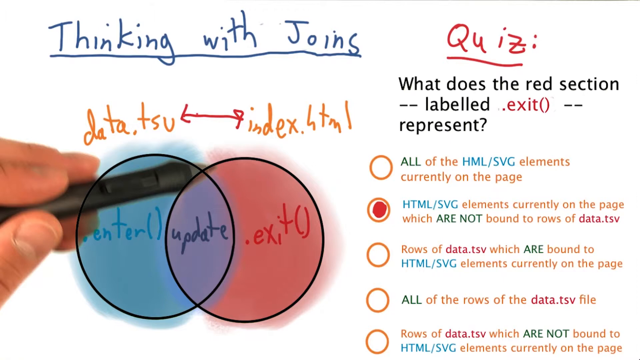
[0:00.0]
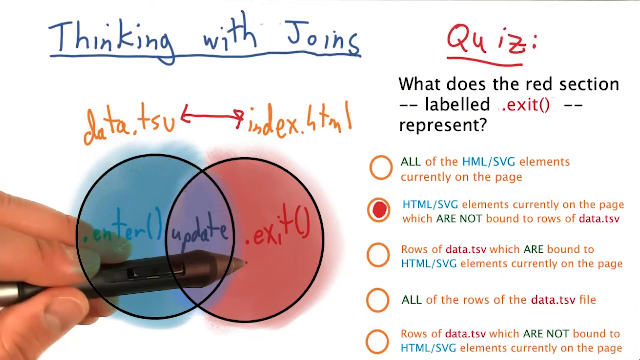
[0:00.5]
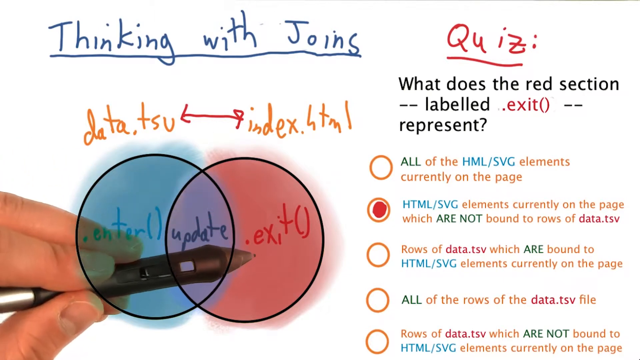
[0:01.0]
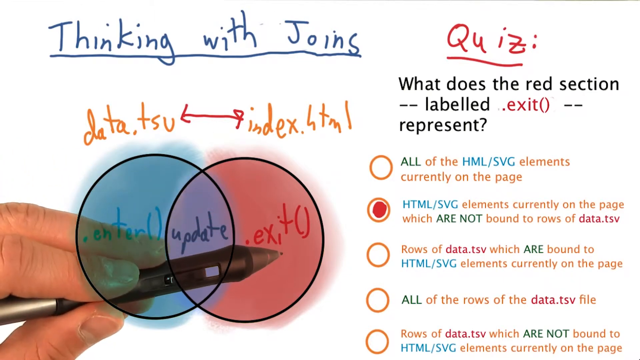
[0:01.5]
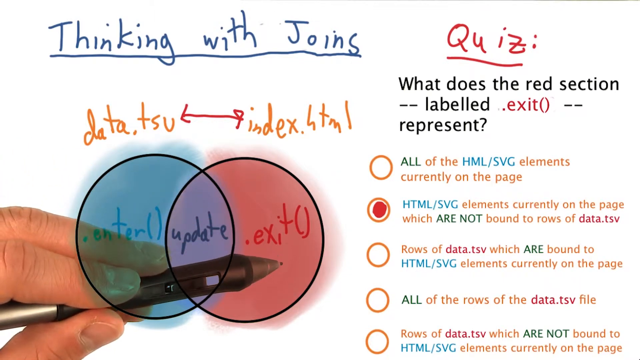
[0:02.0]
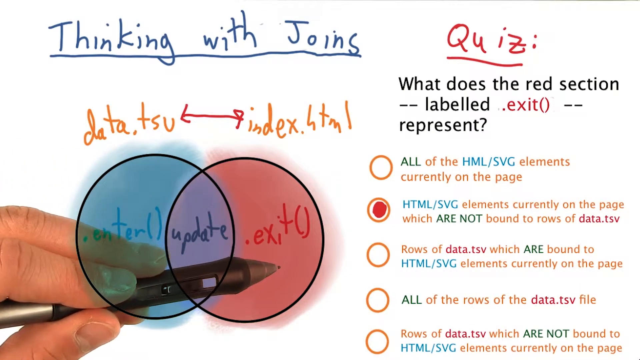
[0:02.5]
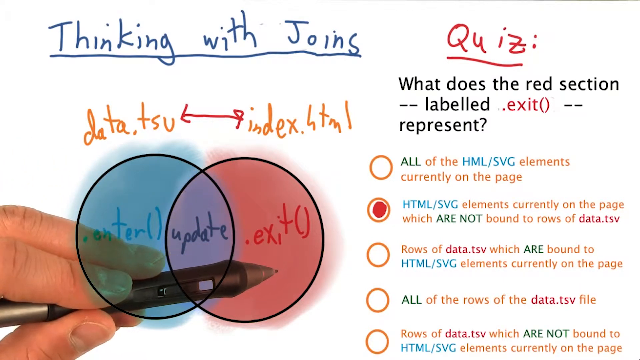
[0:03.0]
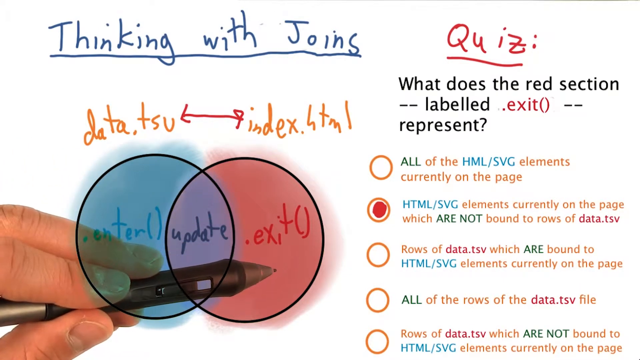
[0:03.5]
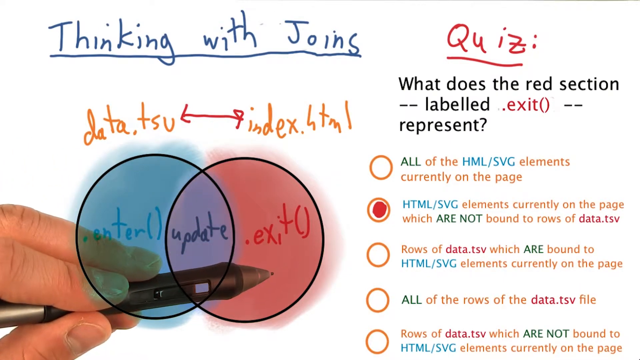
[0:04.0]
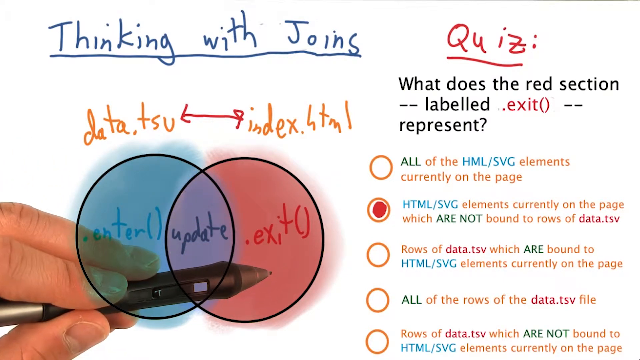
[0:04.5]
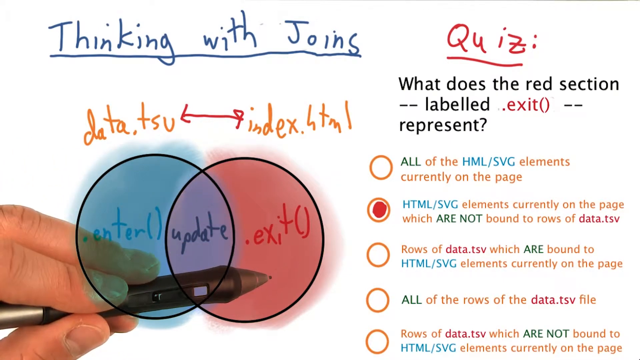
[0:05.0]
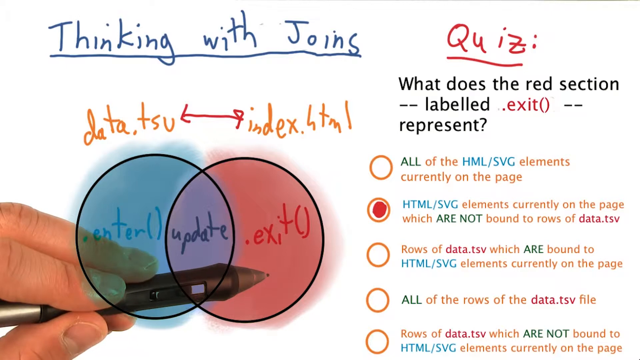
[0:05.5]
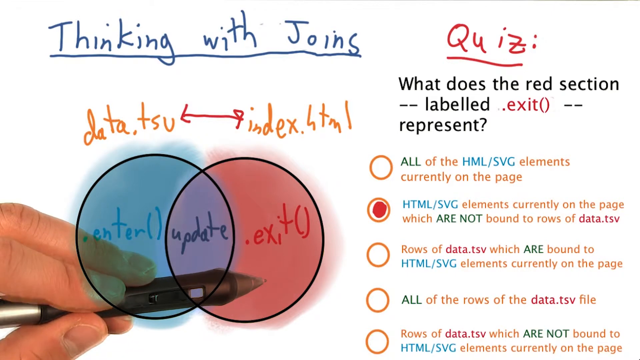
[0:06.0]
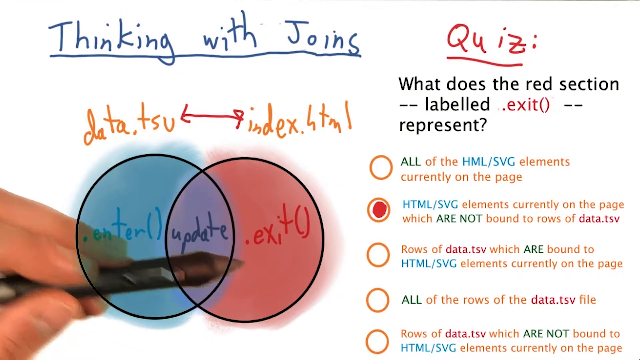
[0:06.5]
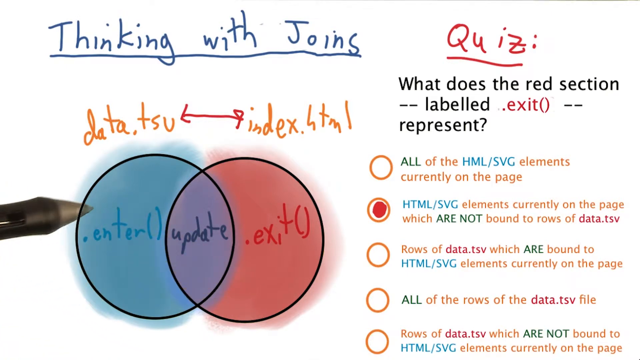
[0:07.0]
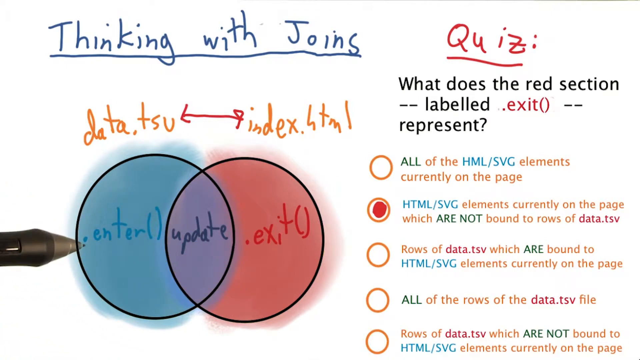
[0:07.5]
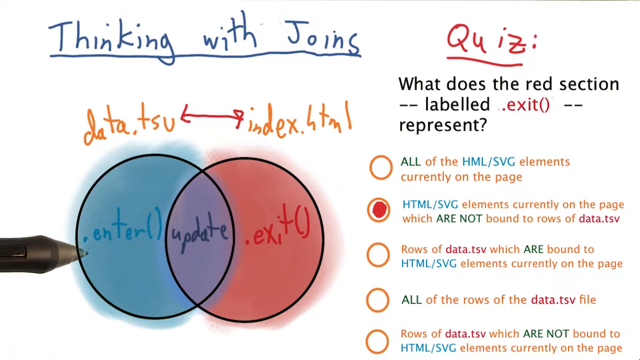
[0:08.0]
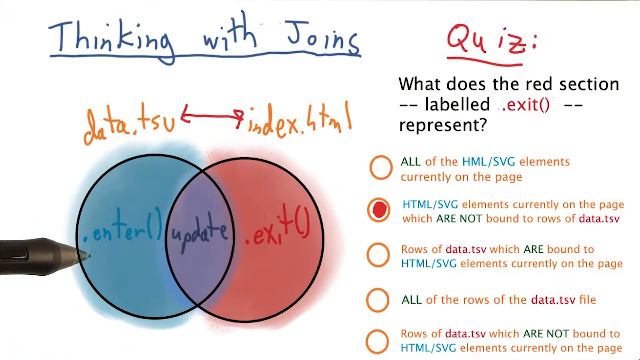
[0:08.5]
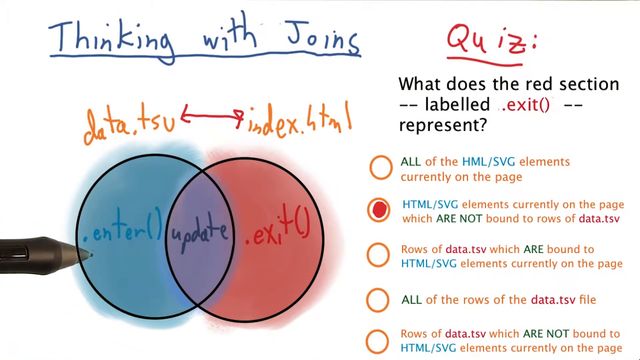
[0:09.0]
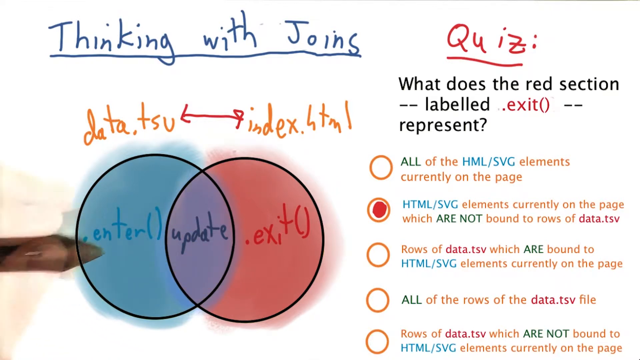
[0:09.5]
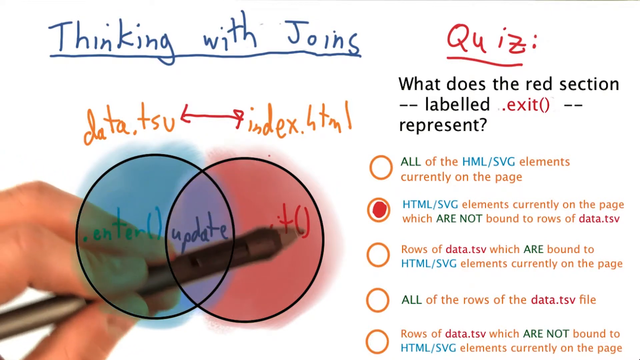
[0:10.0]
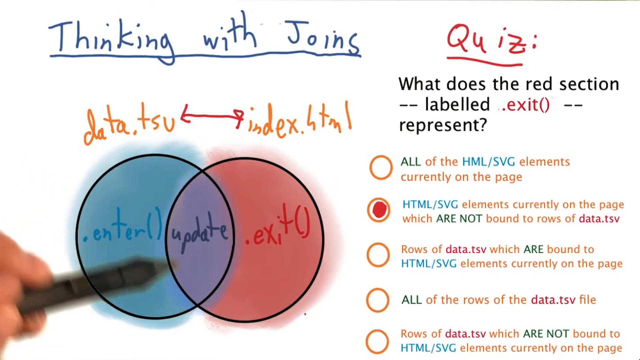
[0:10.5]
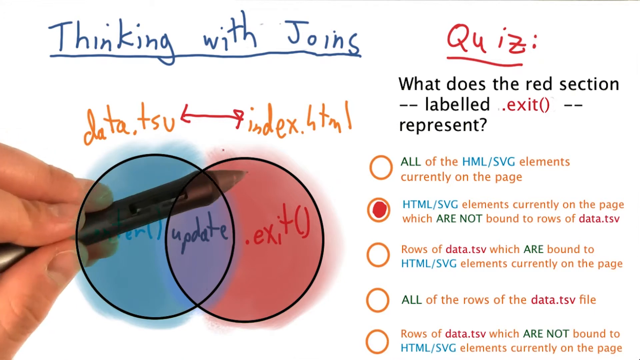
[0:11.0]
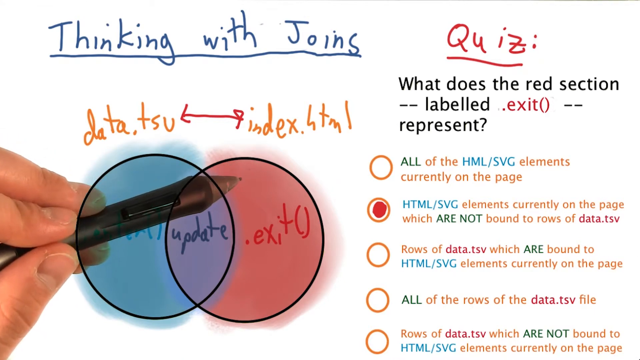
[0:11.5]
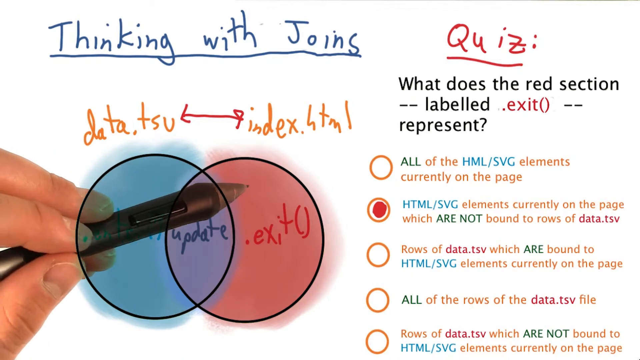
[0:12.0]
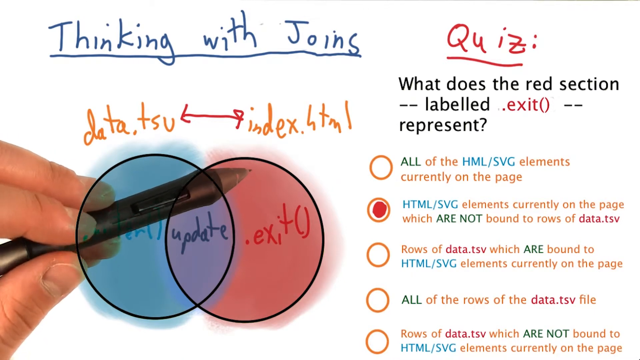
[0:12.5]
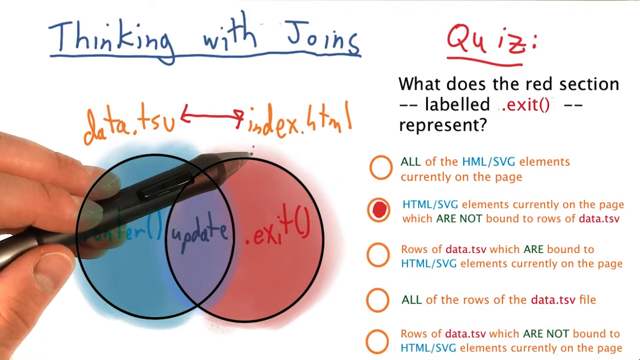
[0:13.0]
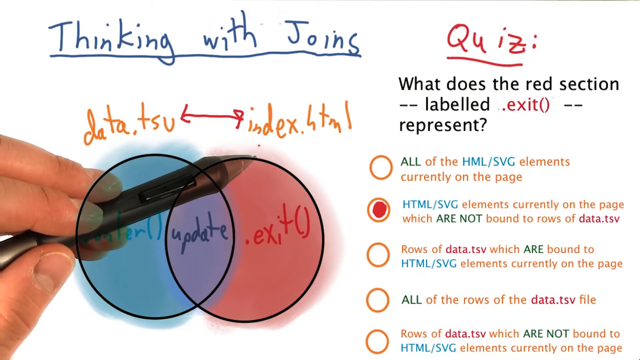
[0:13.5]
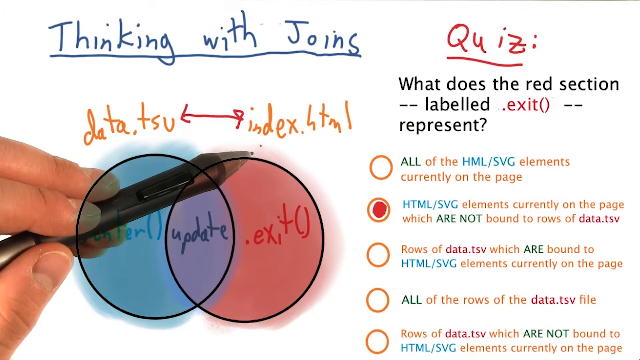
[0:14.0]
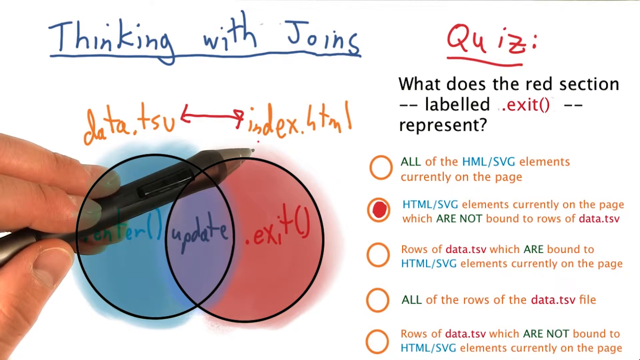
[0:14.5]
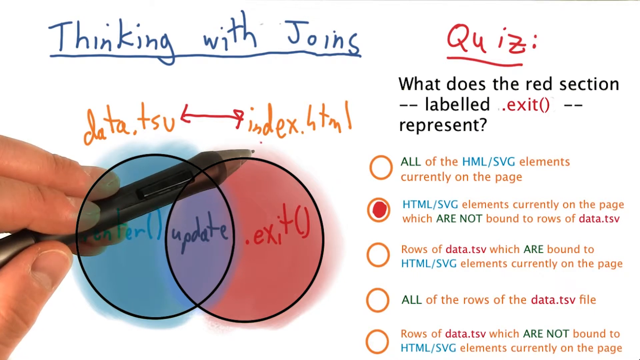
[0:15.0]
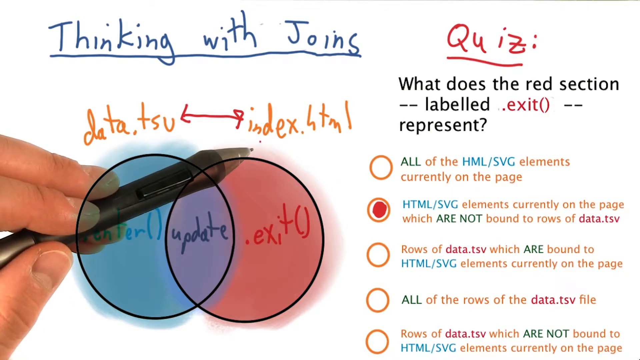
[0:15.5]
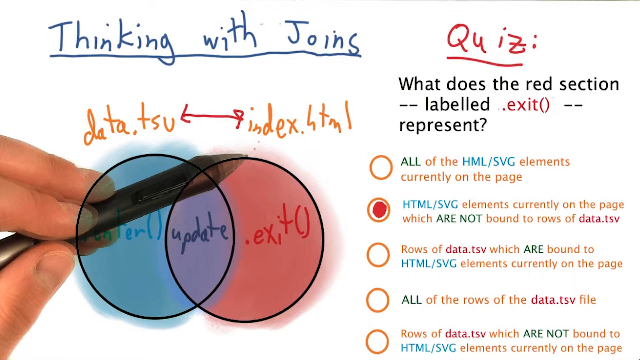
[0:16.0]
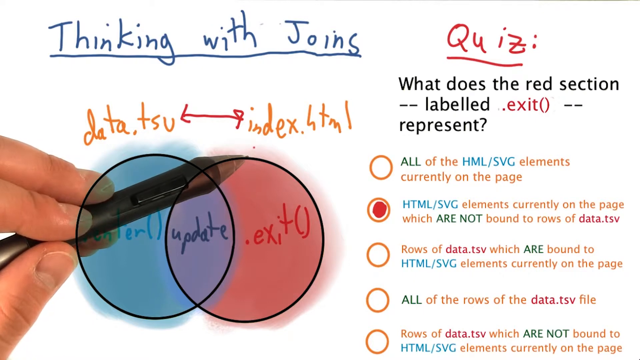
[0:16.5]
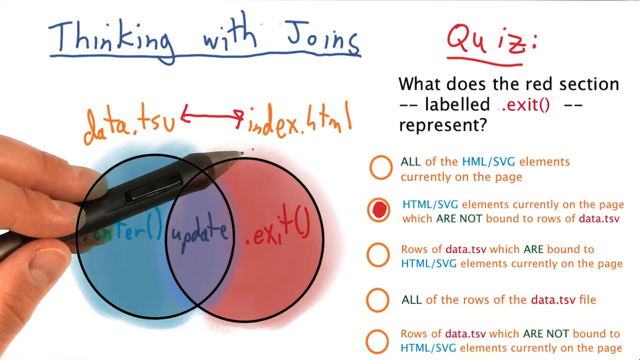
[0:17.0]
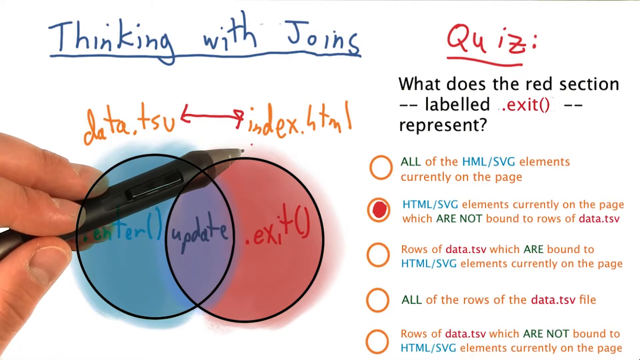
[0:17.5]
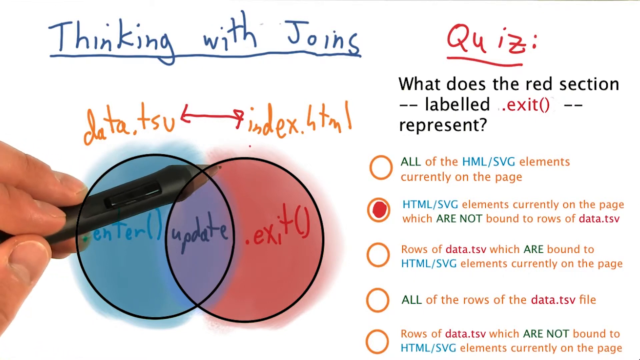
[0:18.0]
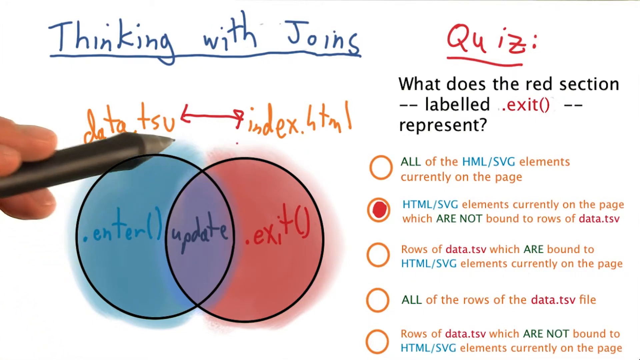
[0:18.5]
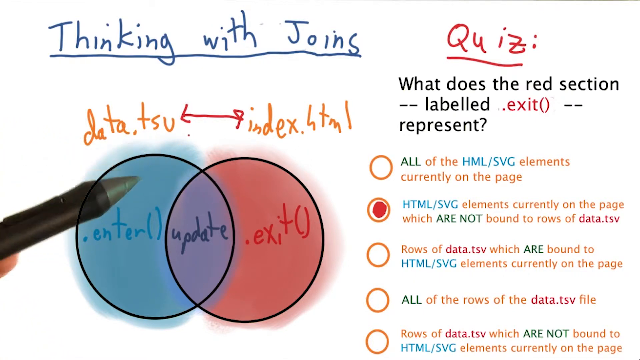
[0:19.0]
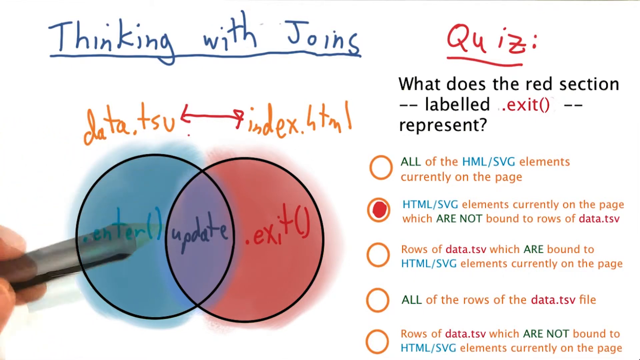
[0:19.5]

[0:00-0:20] The screen opens on a white page titled "Thinking with Joins" at the top. On the right-hand side there is a quiz whose question reads "what does the red section labeled .exit represent?" In the bottom left is a Venn diagram, and a person gestures toward it with a pen. The pen first points at the red ".exit" side, then moves over to the blue side on the left, where it says ".enter", and then circles around the Venn diagram as the person probably discusses the topic. The pen hovers over the text "data.tsu", followed by an arrow pointing in both directions and "index.html". It then moves back to the Venn diagram and hovers over the top of its center.